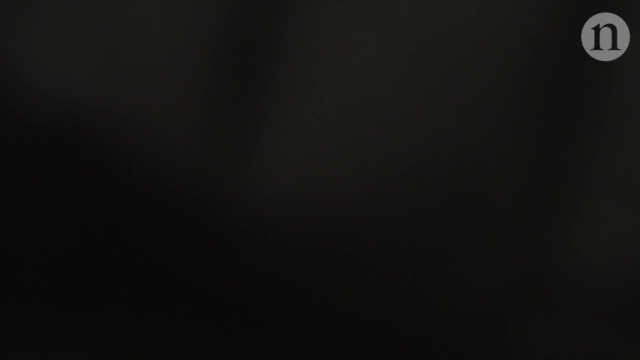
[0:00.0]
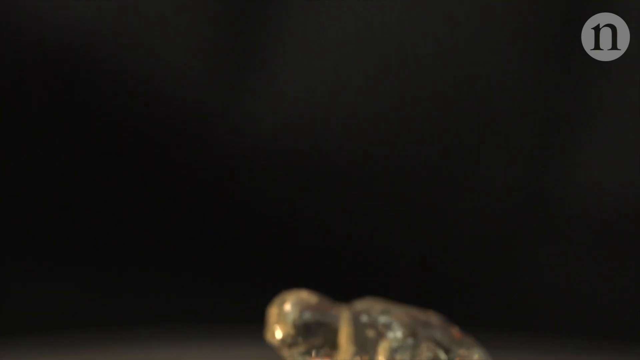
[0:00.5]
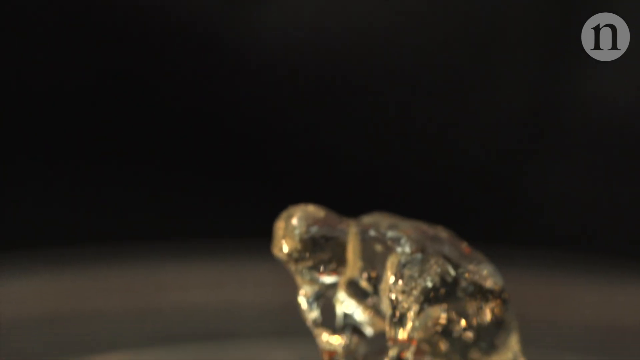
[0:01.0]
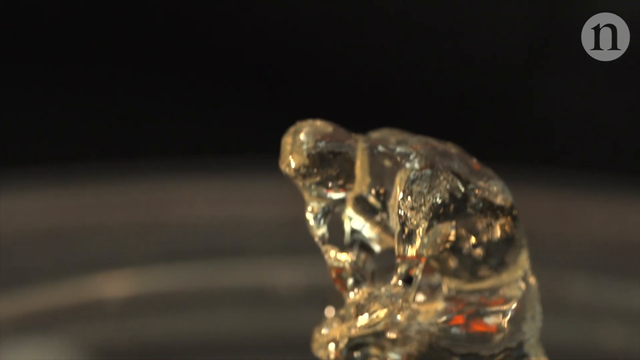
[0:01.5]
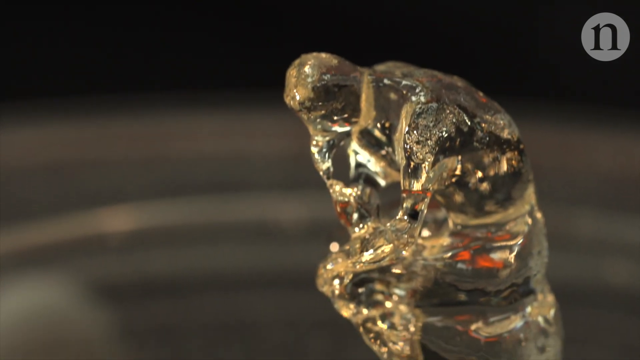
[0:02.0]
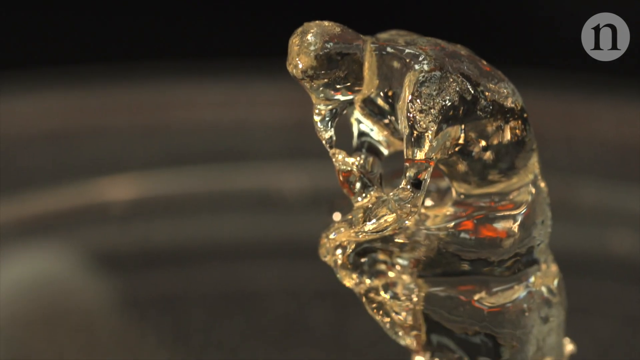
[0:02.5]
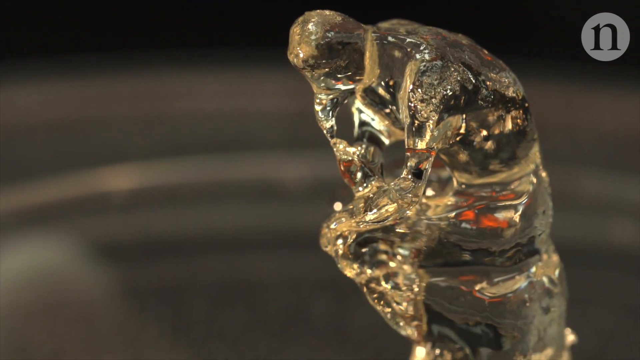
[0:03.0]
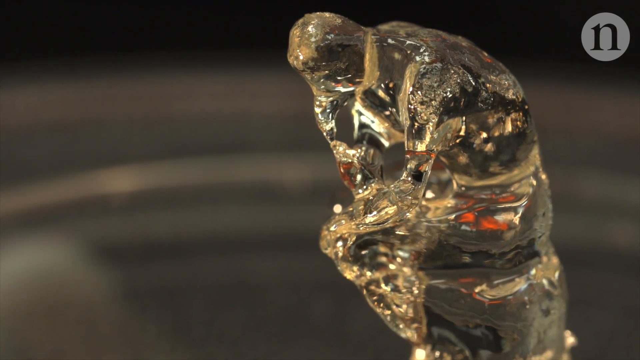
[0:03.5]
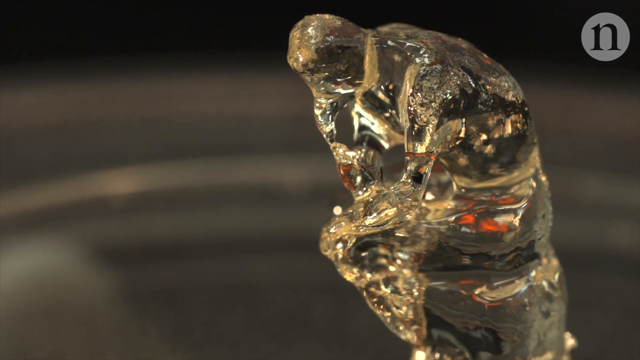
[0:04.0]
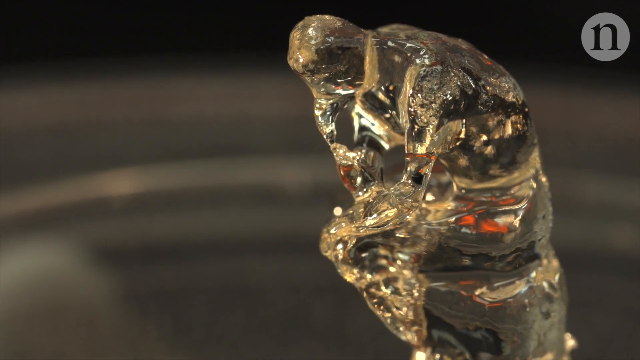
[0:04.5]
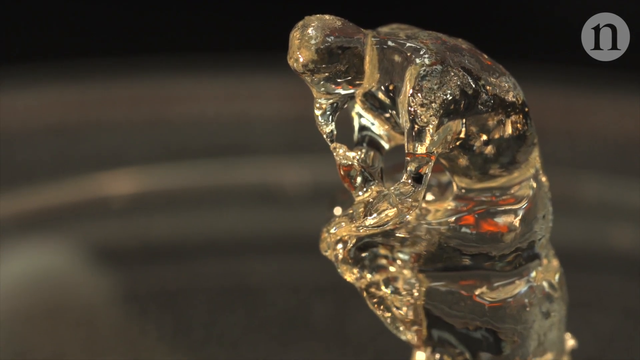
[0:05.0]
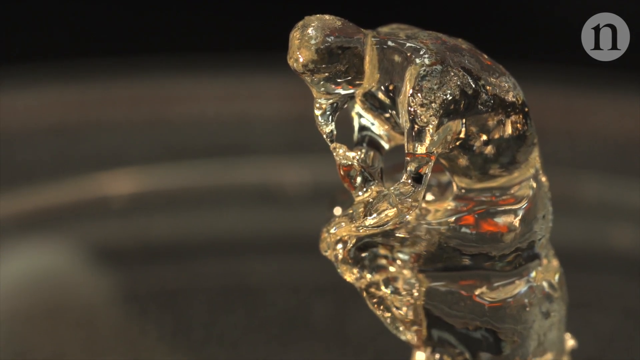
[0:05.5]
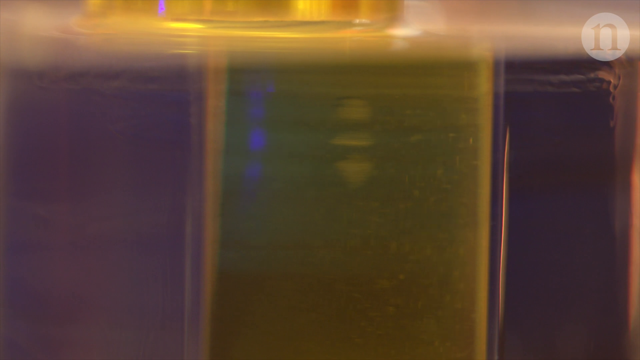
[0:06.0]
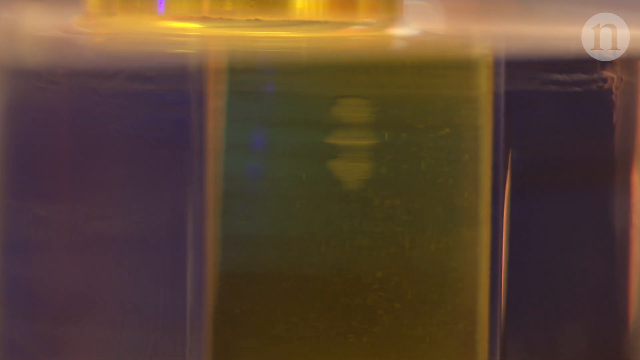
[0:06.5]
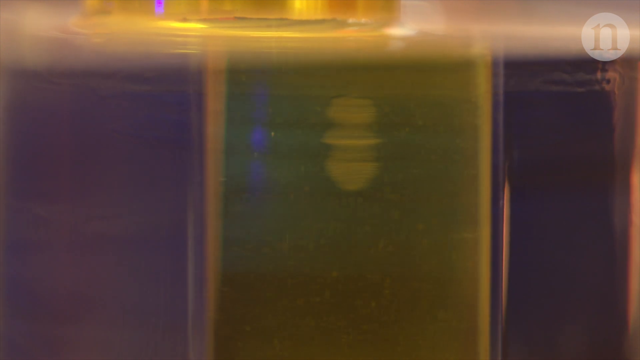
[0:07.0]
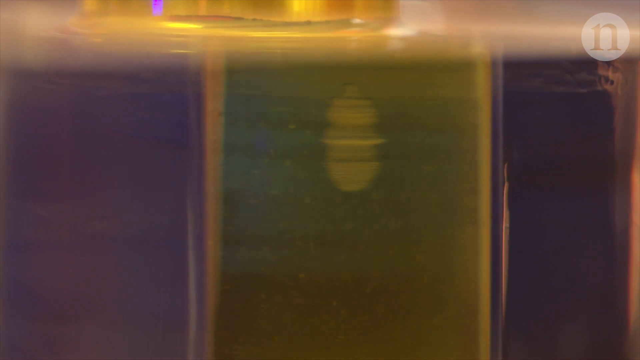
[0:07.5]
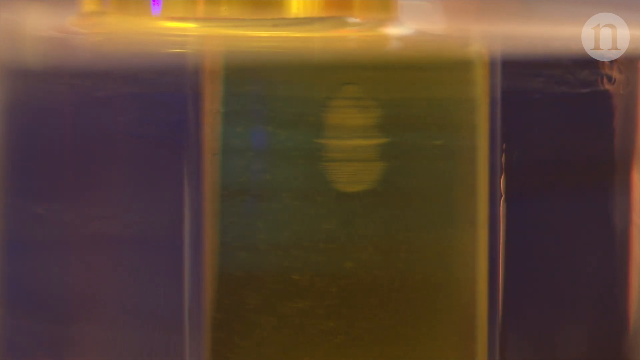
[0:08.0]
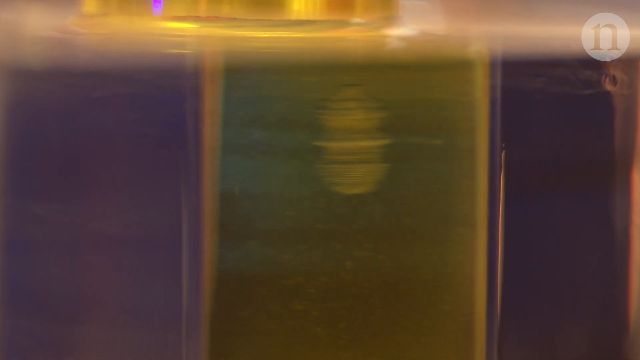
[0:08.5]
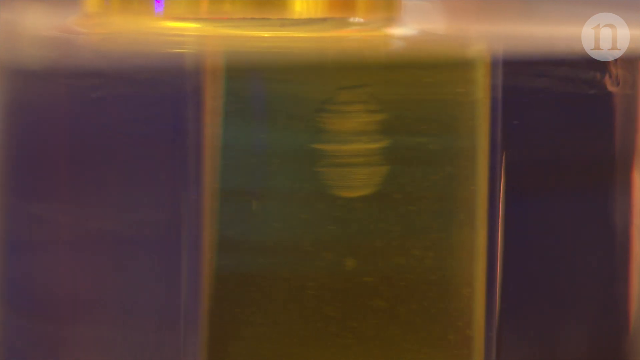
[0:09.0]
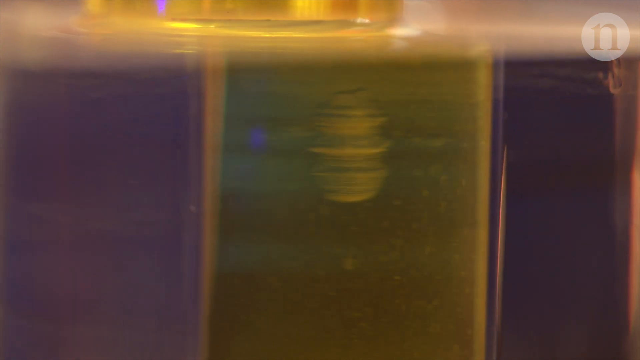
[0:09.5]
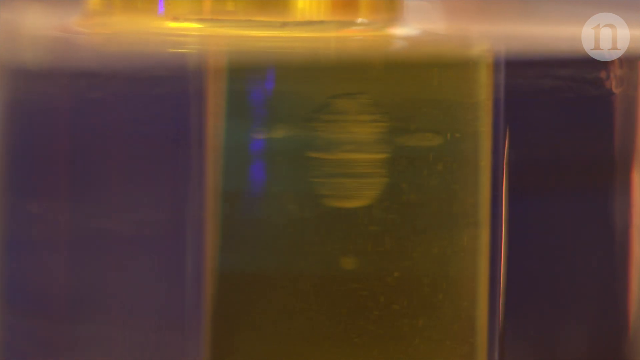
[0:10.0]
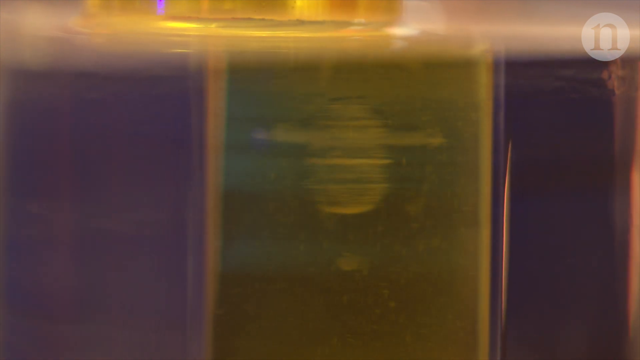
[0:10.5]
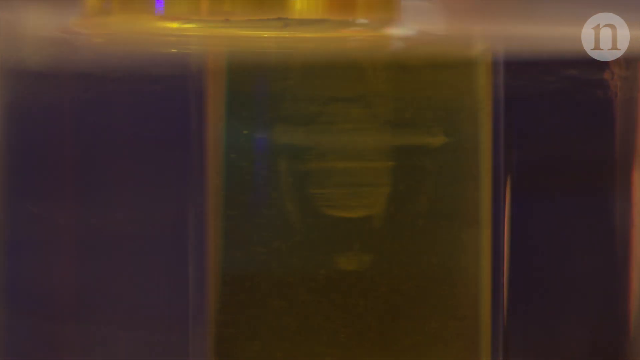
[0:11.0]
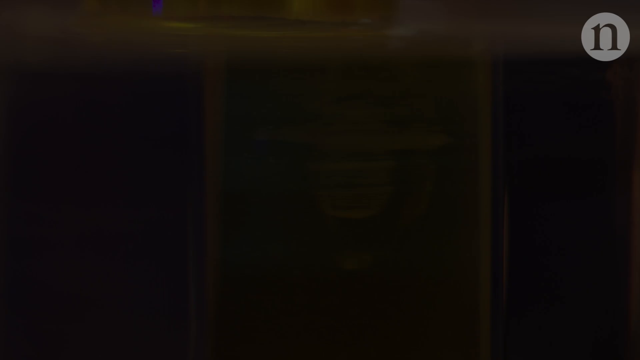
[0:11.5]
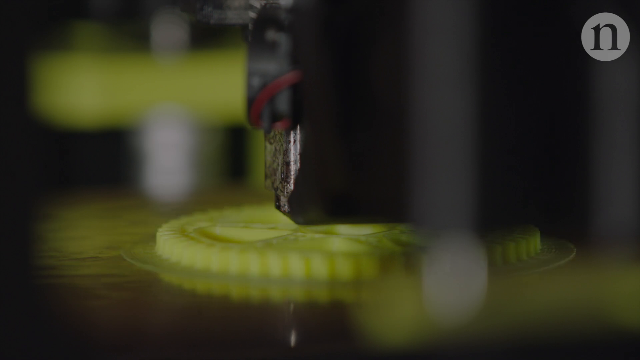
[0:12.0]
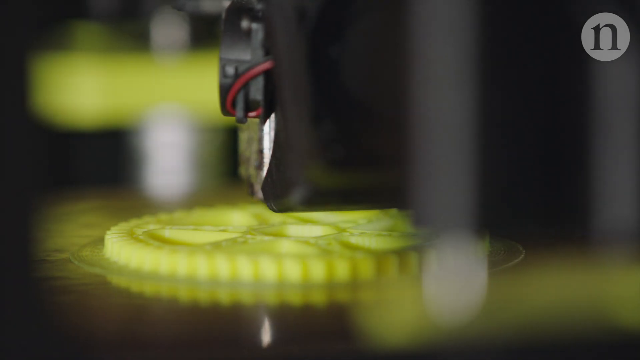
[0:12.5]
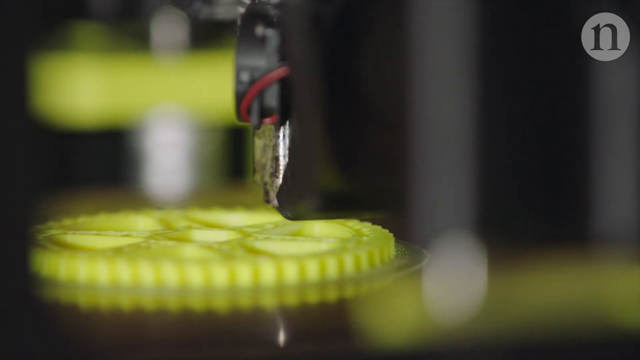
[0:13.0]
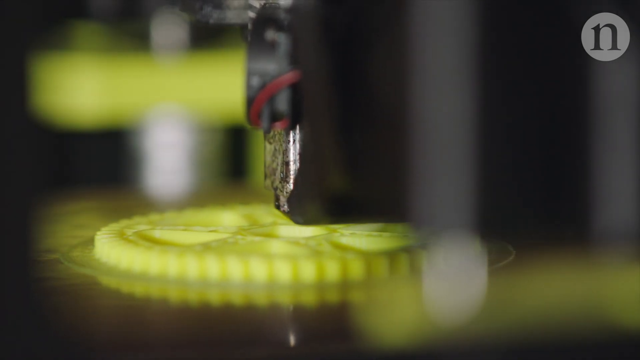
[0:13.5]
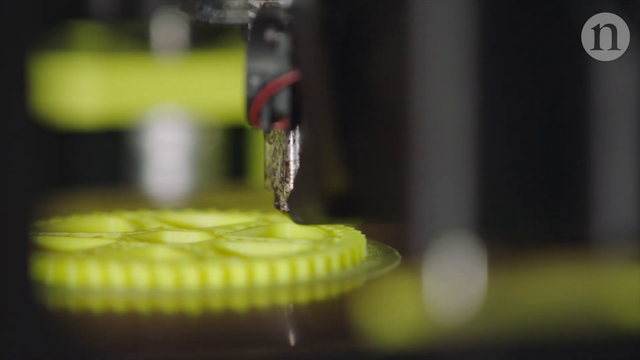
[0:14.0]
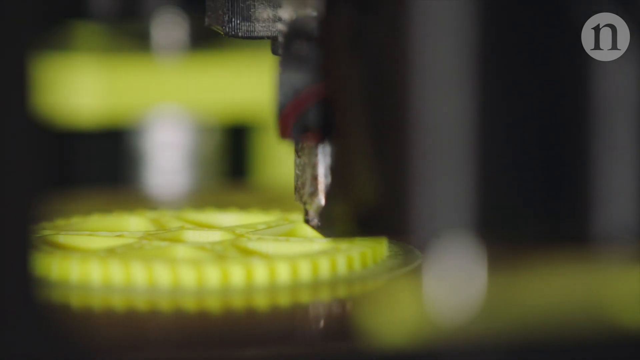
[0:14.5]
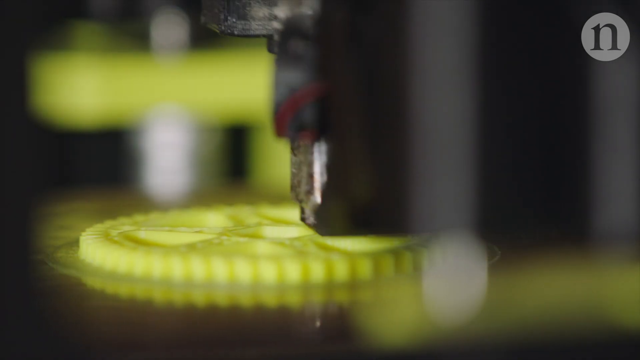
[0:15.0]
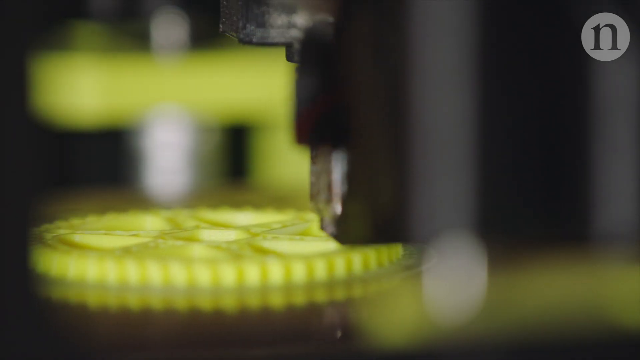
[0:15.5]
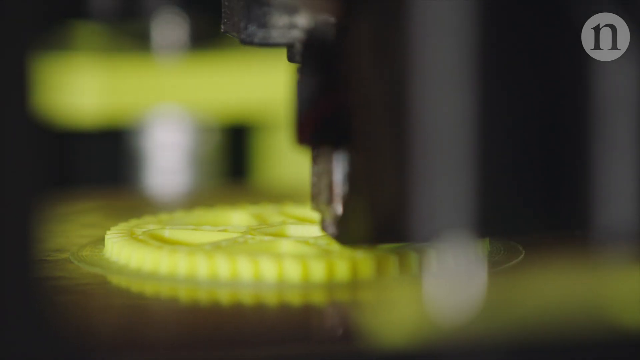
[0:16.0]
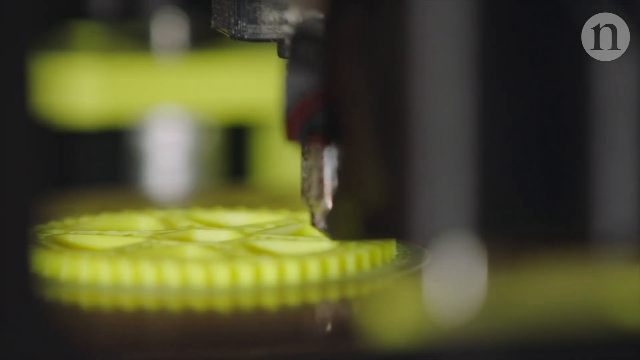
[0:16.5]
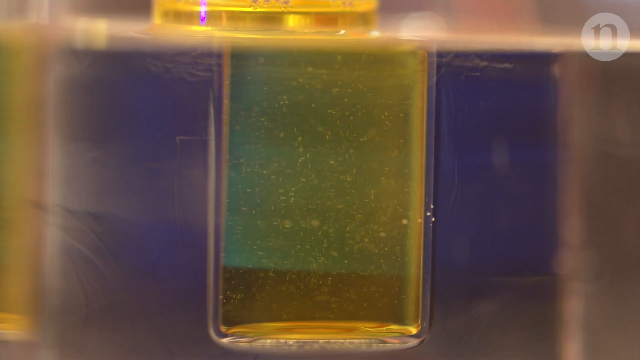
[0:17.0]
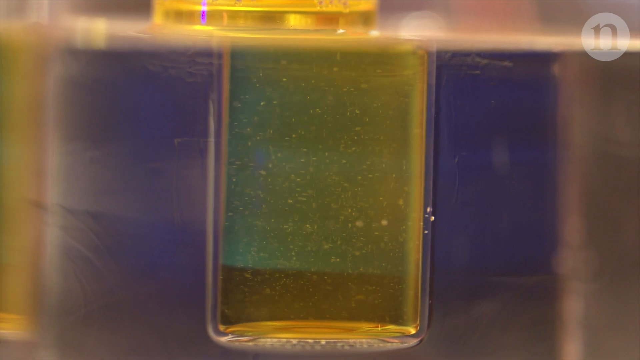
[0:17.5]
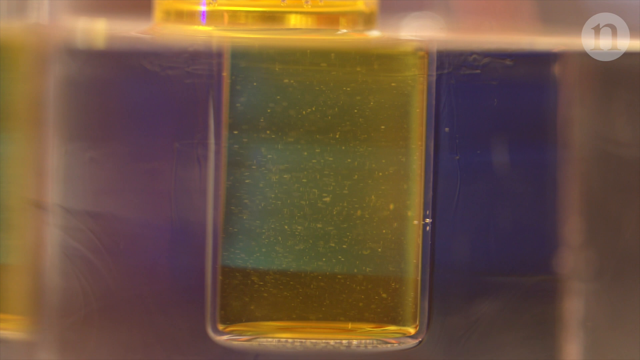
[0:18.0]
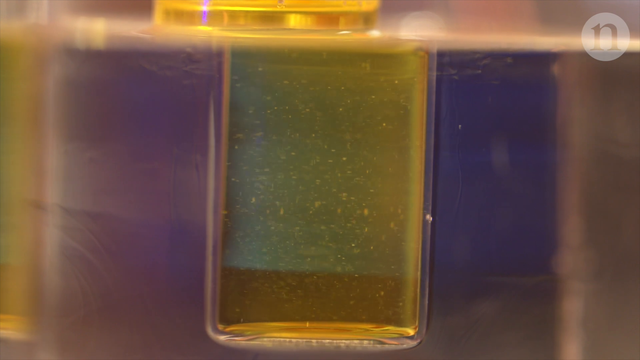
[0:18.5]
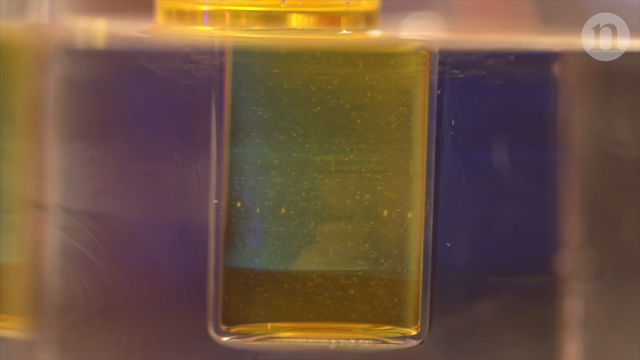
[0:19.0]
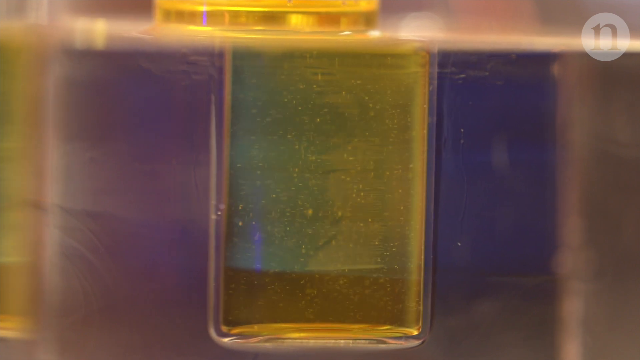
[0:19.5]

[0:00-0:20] A cutter machine is shown, and a man uses it to cut something yellow; what he is cutting is unclear. The material seems to be a particular kind of stone. After that, cutter machines are cutting something, though what it is remains unclear.